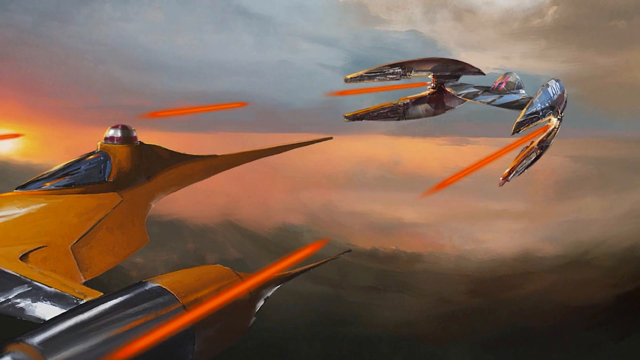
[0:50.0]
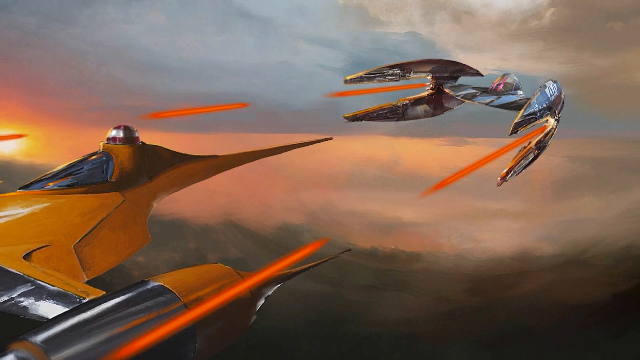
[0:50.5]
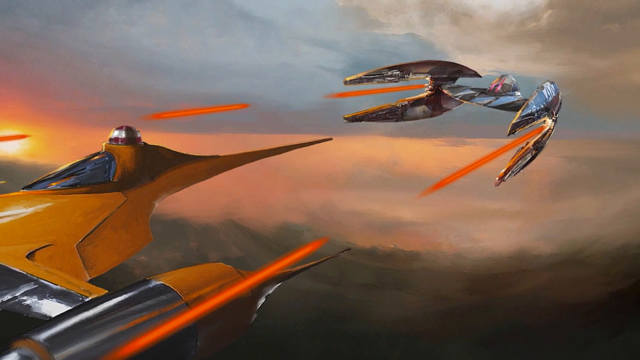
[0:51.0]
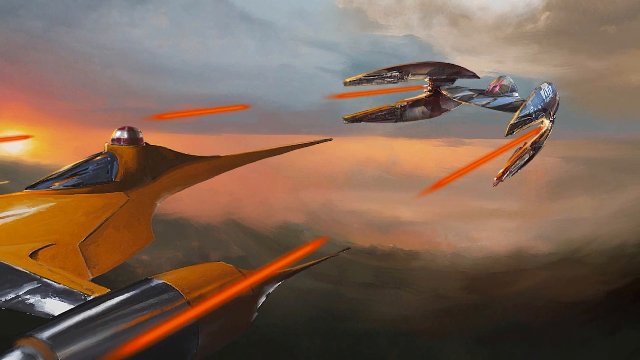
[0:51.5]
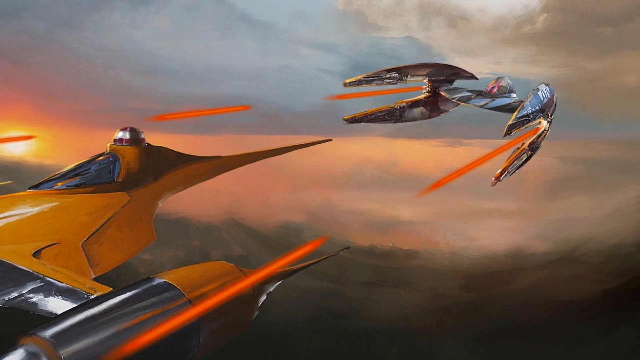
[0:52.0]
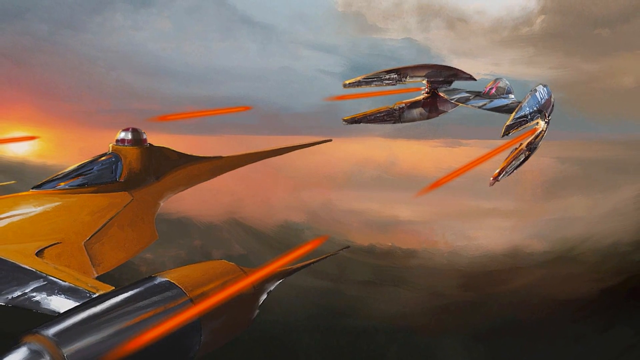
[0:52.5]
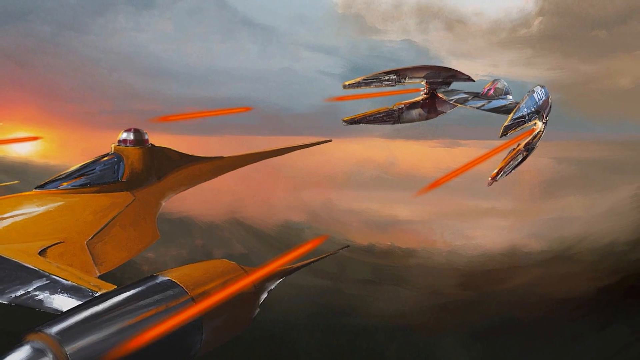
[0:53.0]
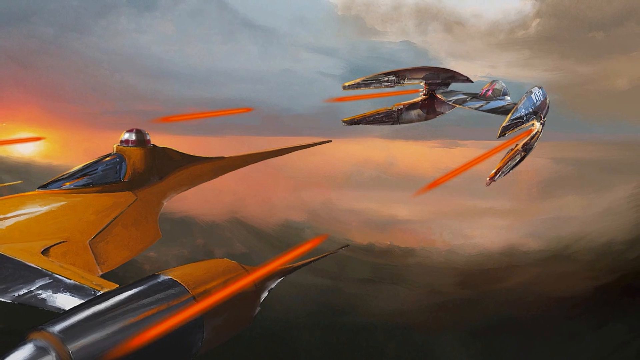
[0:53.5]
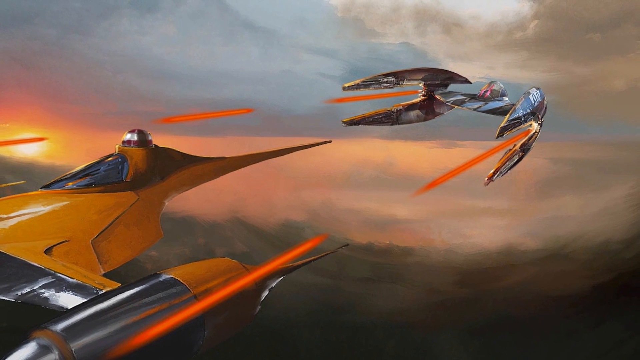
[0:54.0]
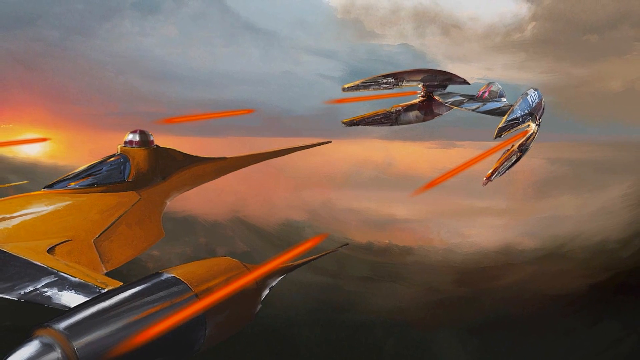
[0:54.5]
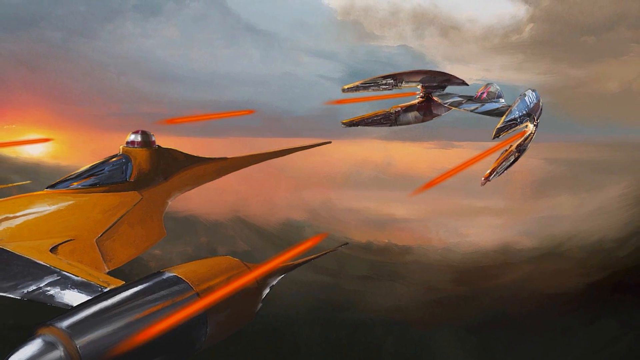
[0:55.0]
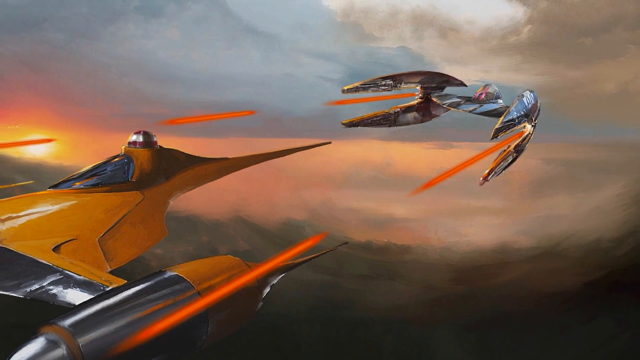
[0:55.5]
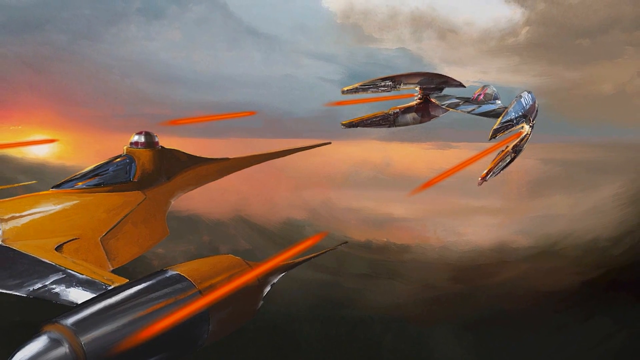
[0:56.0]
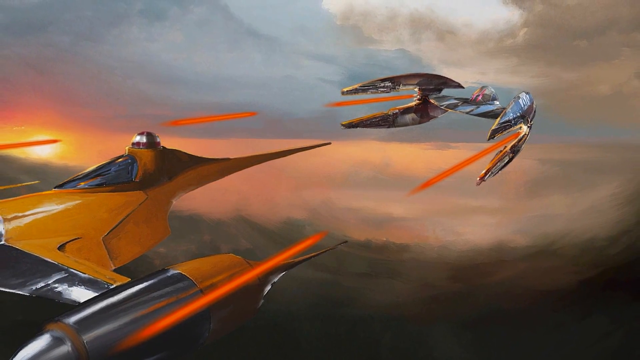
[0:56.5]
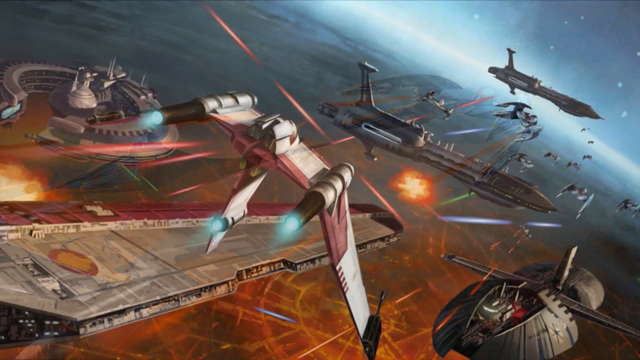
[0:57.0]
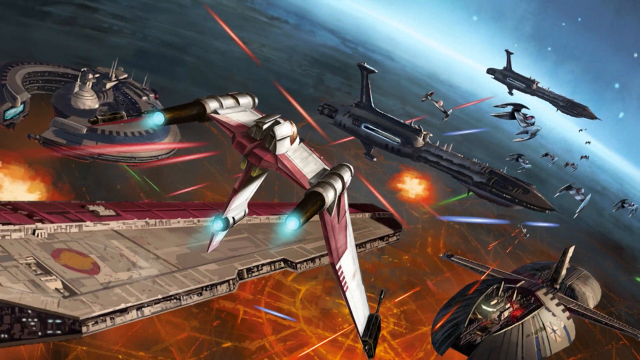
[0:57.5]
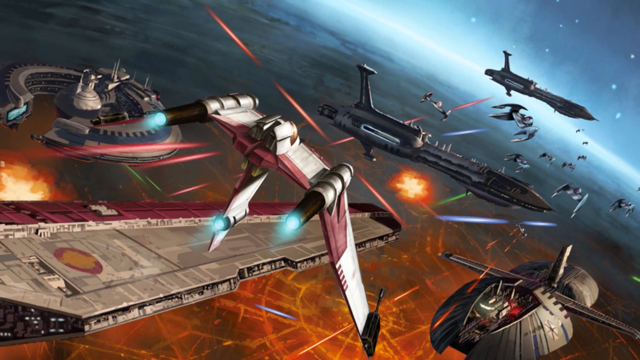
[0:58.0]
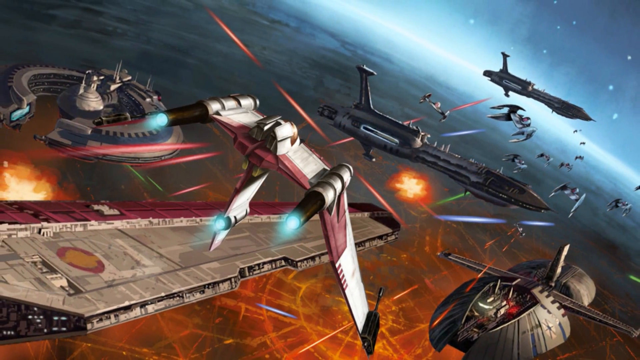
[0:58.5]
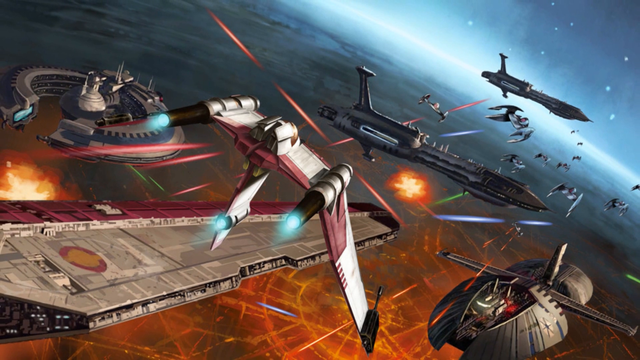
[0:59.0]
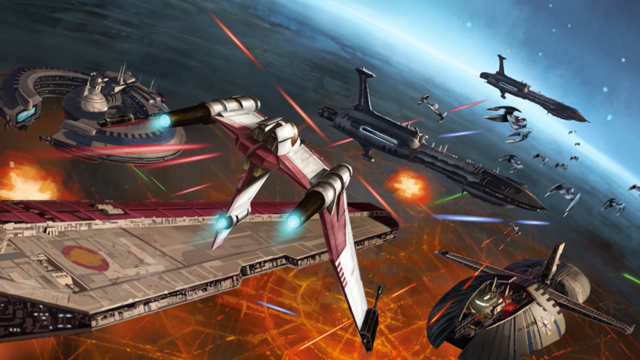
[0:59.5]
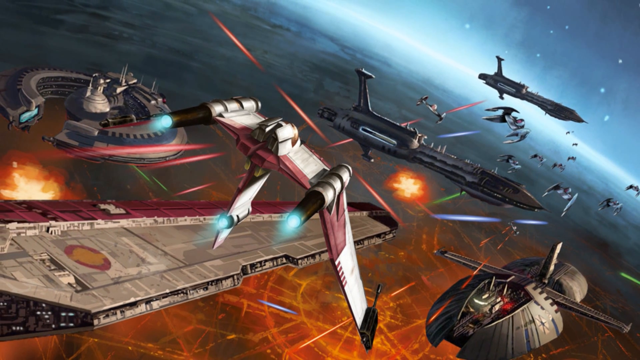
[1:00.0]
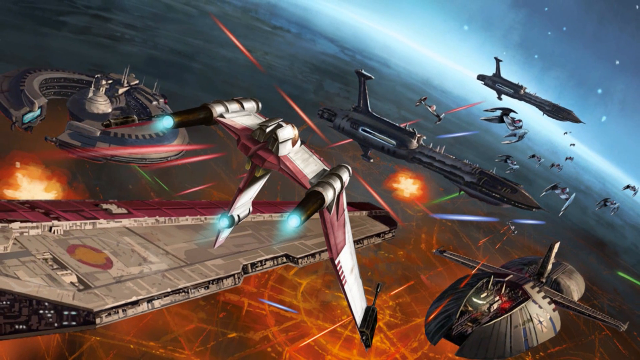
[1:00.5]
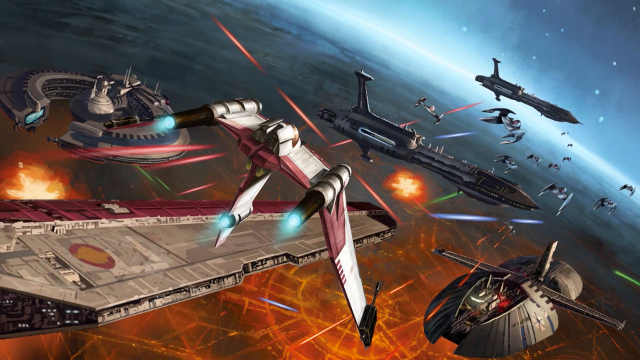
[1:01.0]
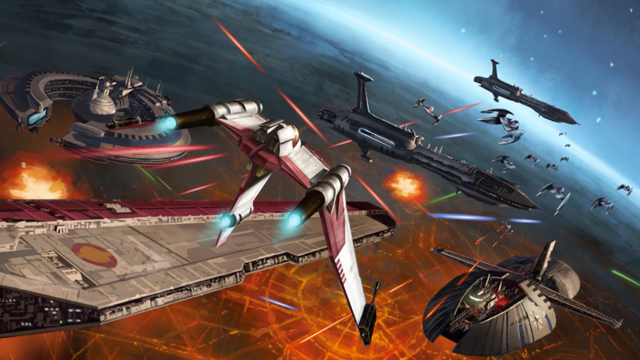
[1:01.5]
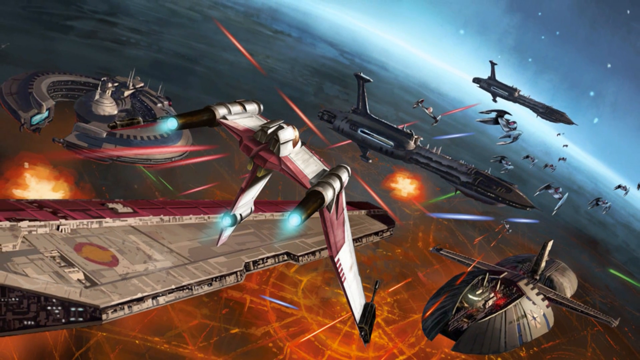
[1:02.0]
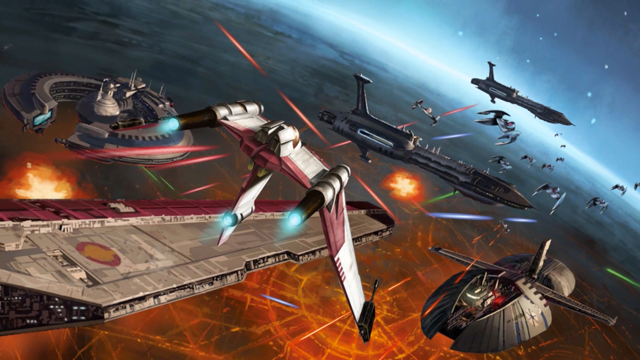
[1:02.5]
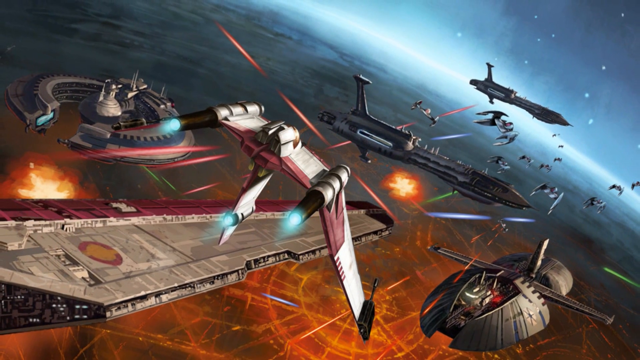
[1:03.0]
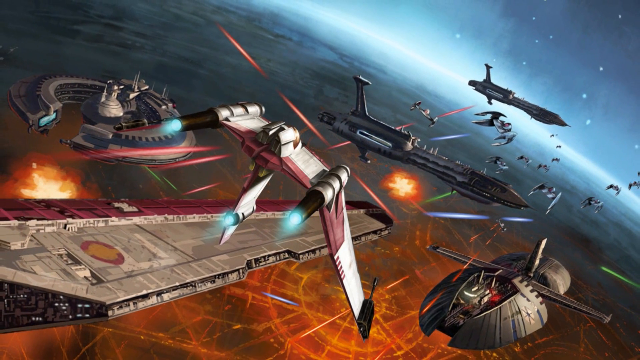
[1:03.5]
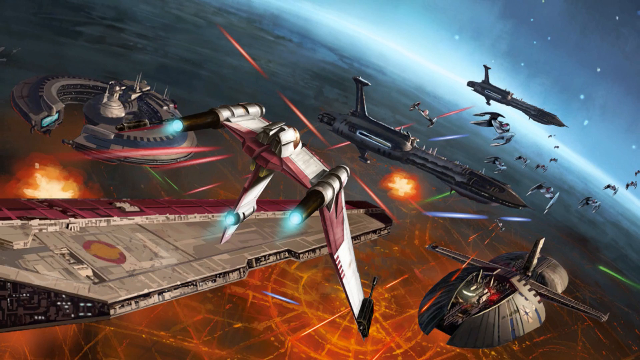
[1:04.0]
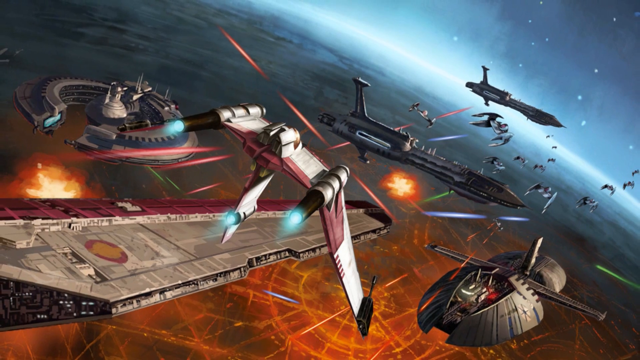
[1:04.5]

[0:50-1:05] The separating spaceships finish their motion. The scene changes to an aerial view of many spaceships of different sizes and shapes, with different lights, including blue, along with exploding light and laser lights in blue, red and green. There appears to be an explosion on the bottom left and another explosion on the middle right. A grid with an orangey glow seems to lie beneath them, and there are maybe some stars in the sky on the top right. The ships all seem to be following each other, apparently on a mission to somewhere.